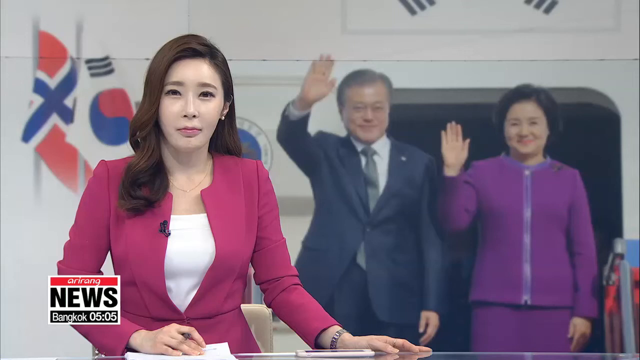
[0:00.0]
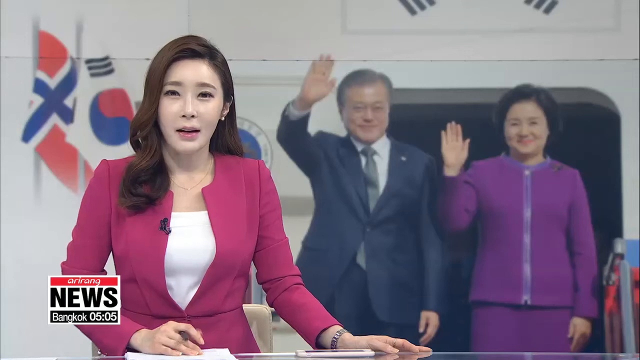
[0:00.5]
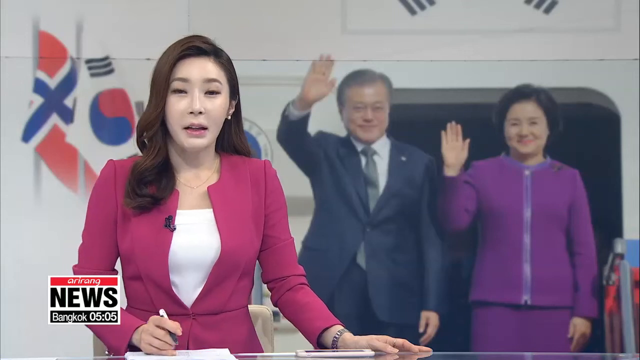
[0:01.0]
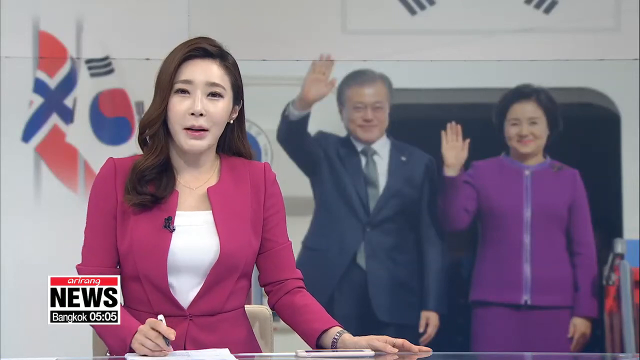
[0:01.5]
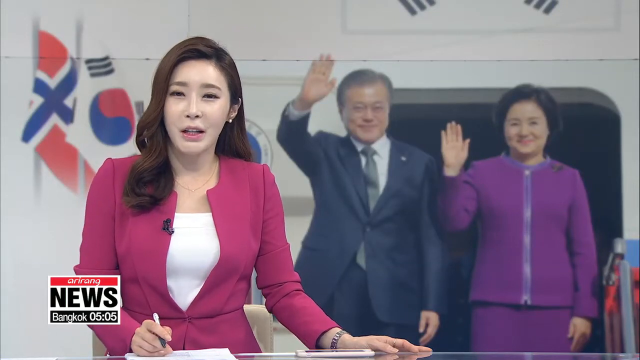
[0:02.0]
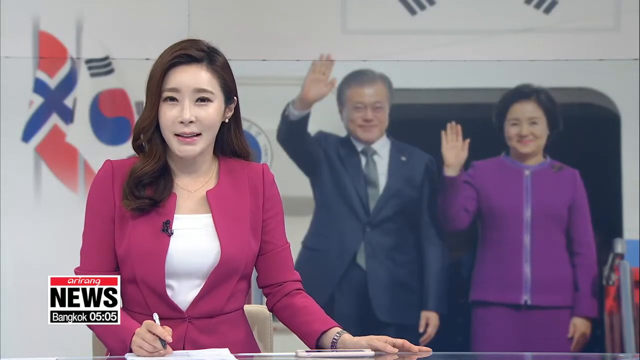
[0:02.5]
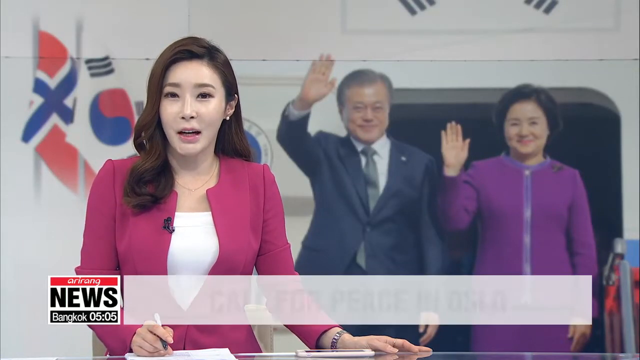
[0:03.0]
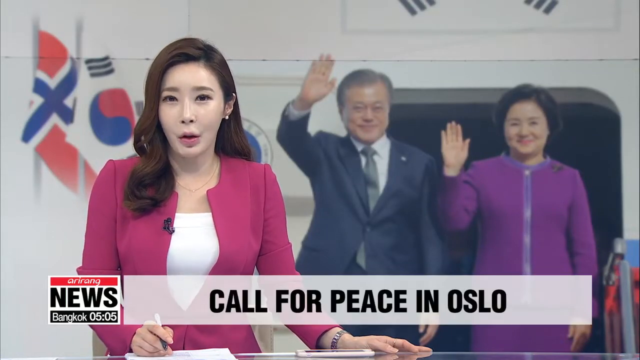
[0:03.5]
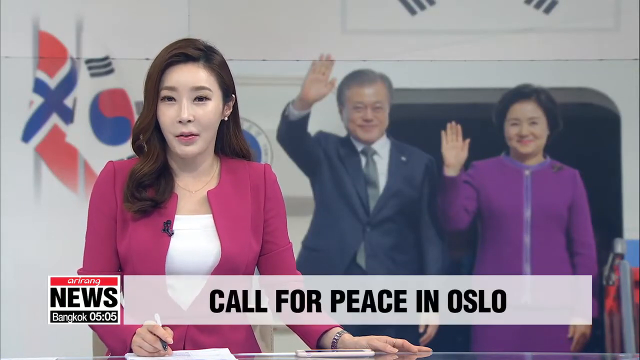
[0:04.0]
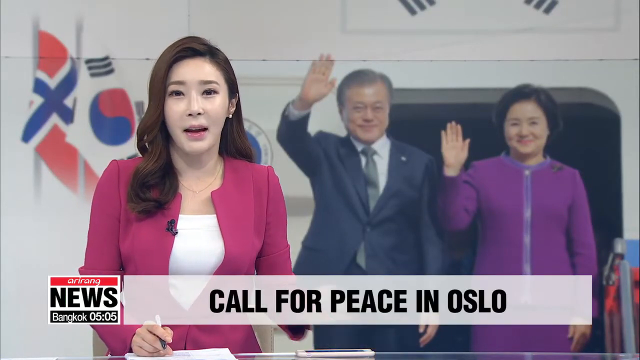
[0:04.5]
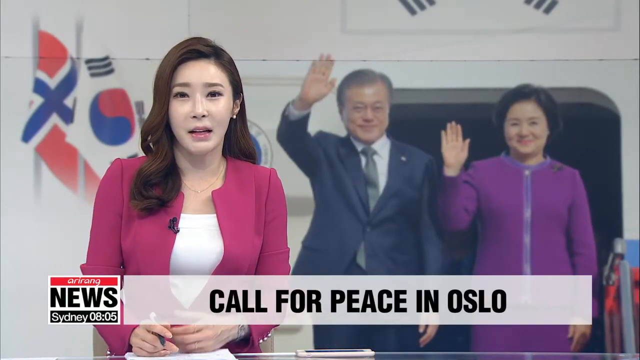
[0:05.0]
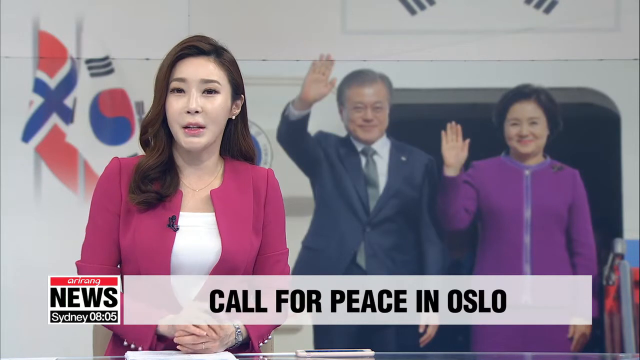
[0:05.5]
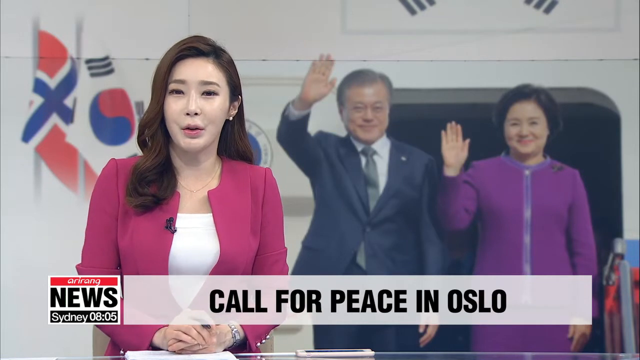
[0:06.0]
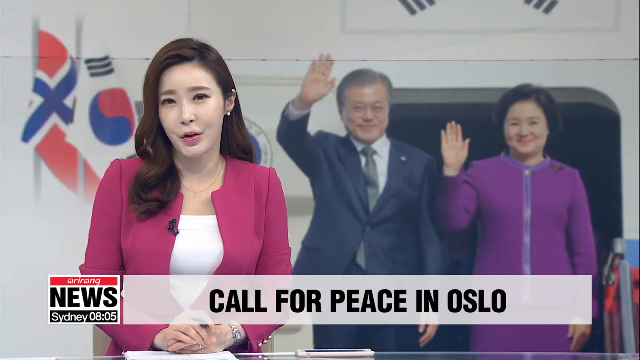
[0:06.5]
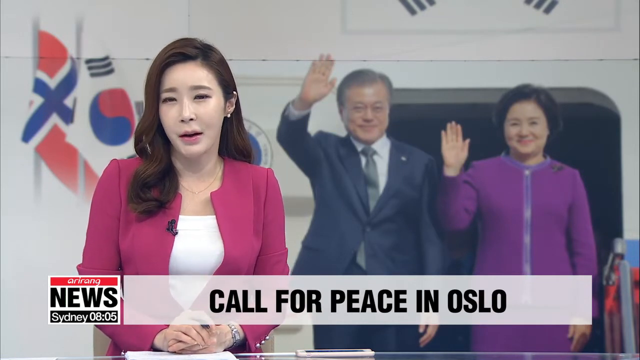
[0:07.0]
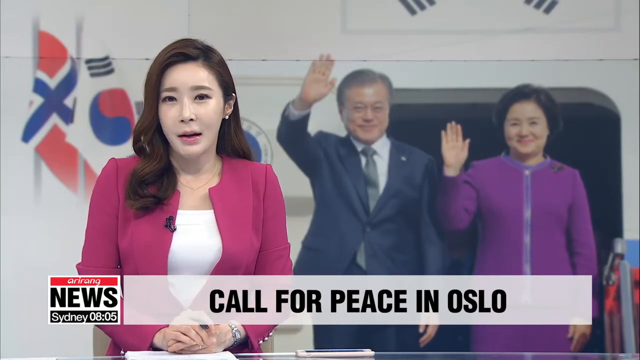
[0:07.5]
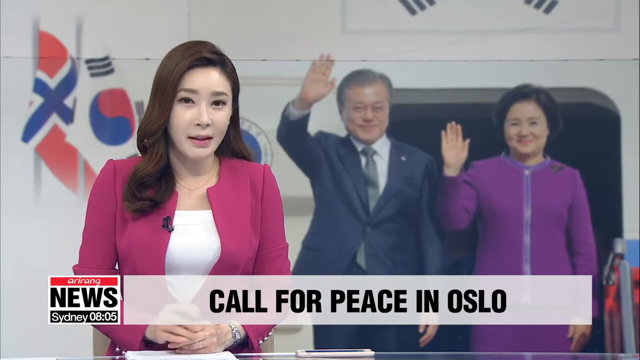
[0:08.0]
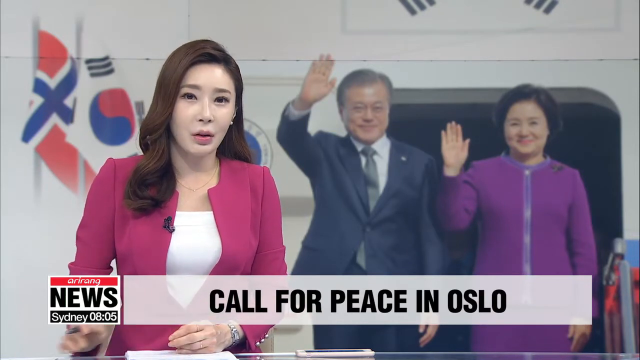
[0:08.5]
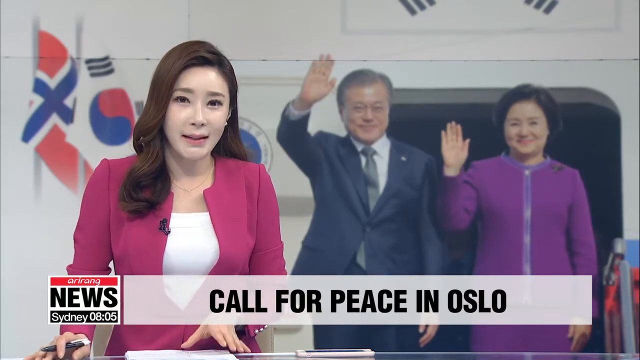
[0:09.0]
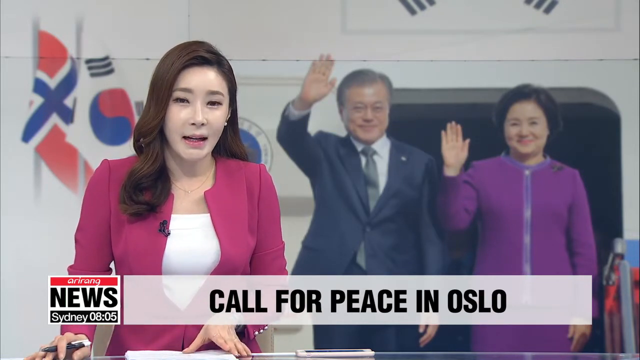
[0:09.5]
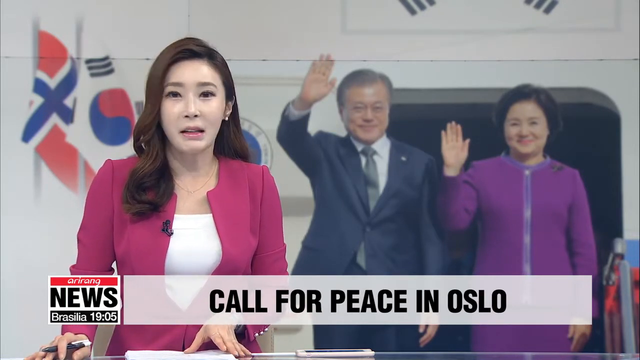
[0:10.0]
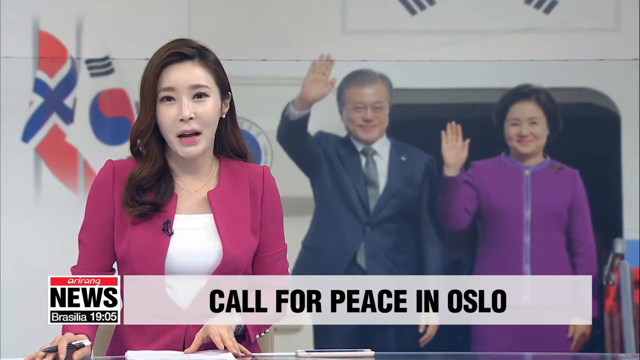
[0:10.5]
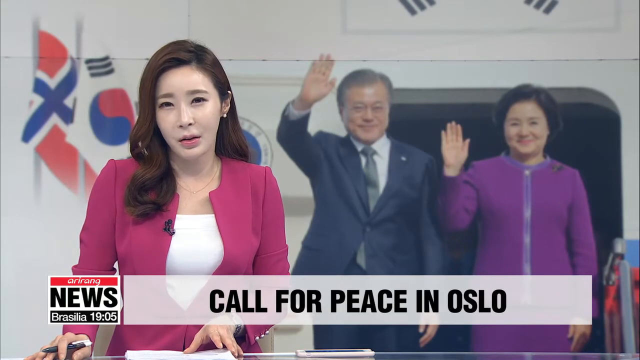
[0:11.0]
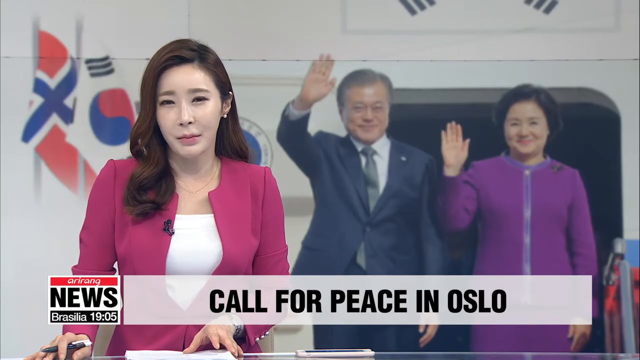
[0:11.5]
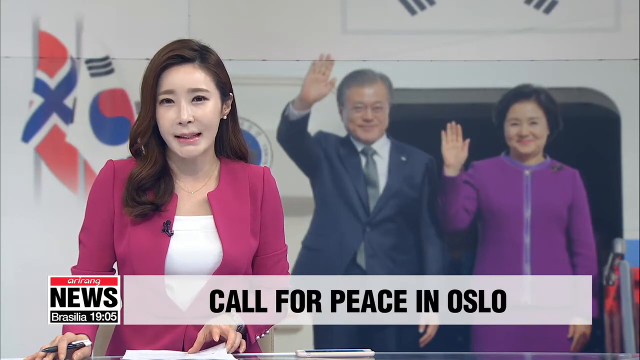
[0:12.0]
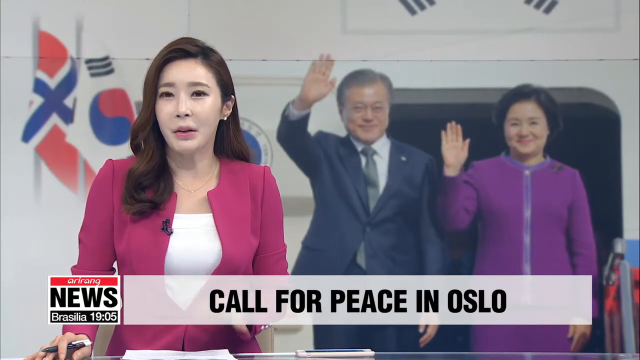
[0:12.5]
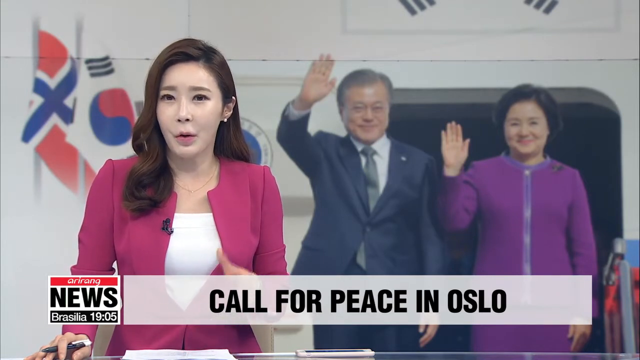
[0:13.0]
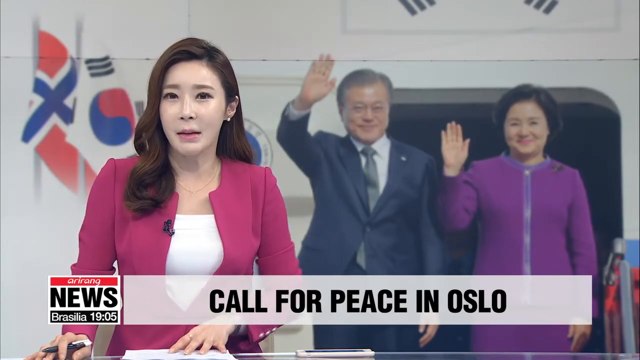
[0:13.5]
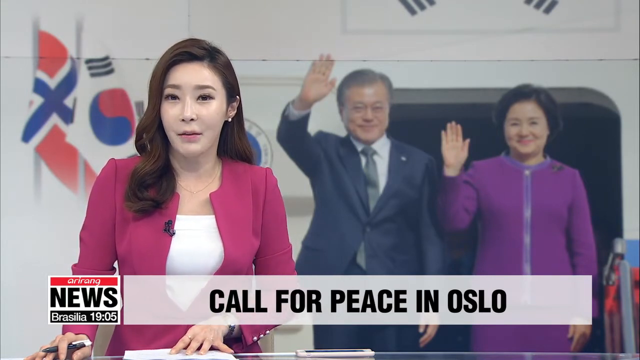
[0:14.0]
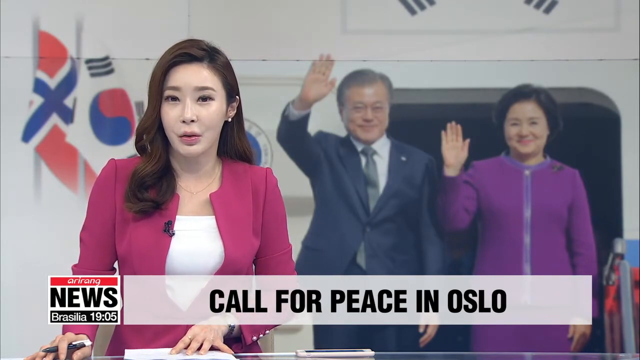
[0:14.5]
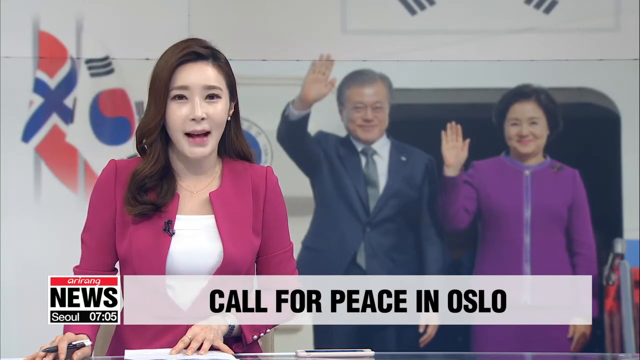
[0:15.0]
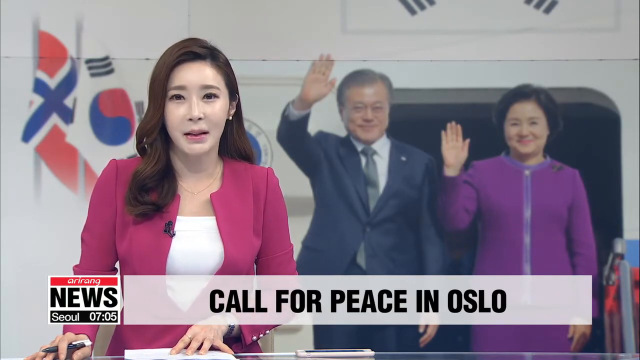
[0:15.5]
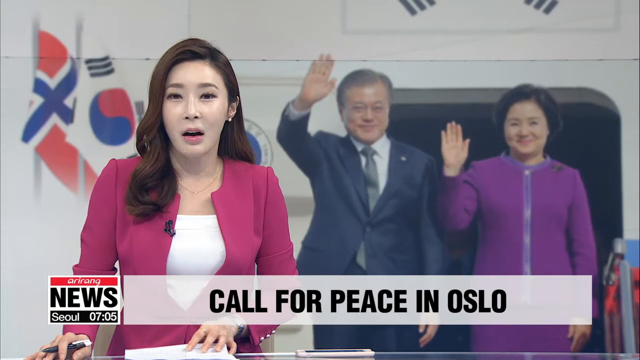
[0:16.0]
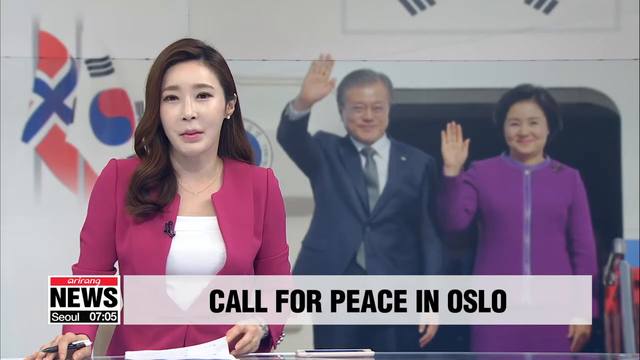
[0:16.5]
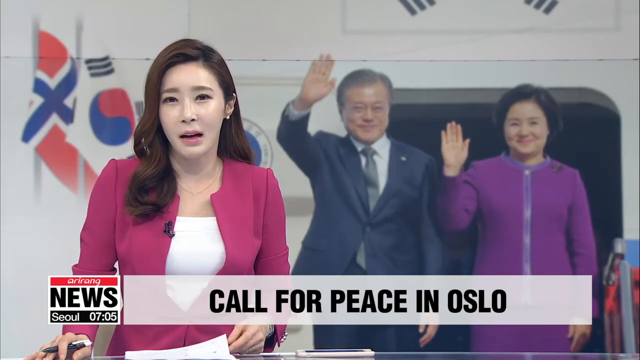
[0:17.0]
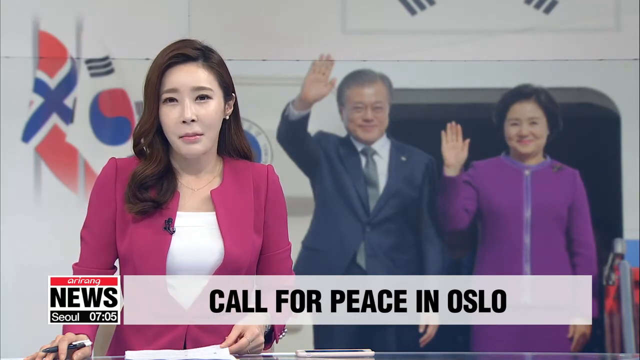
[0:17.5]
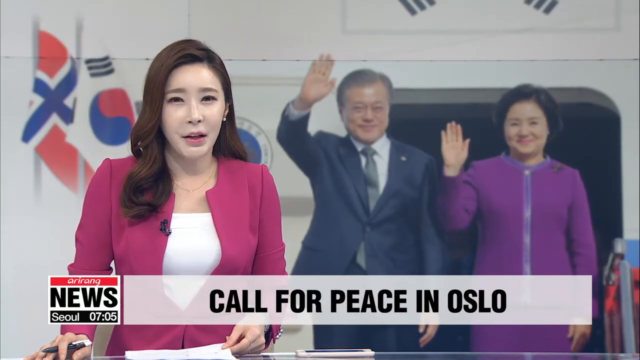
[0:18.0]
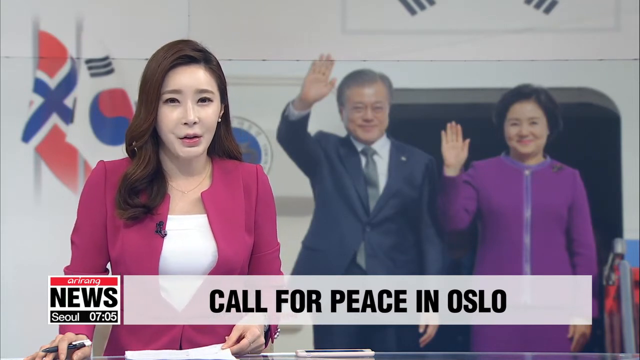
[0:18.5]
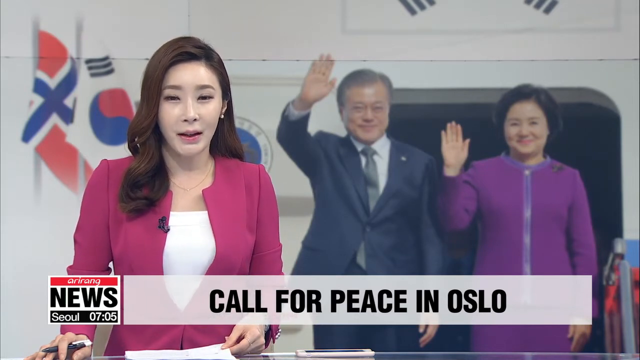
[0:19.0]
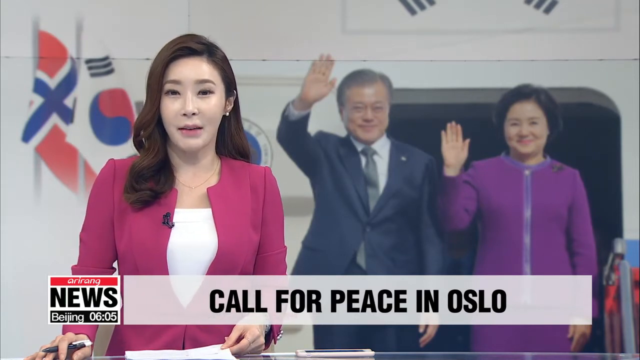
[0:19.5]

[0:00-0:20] A news broadcast concerns a call for peace in Oslo. The newscaster has wavy brown hair and wears a big colored jacket. Behind her is a picture of a man and a woman waving to the public; the man wears a blue suit, white shirt and gray tie, and the woman wears a purple gown. A red, white, blue and black flag, the Korean flag, is also visible behind the newscaster.